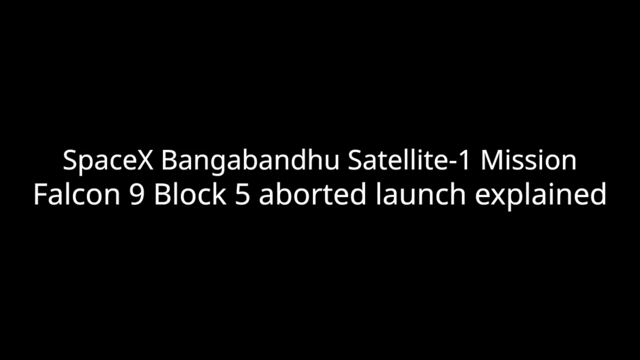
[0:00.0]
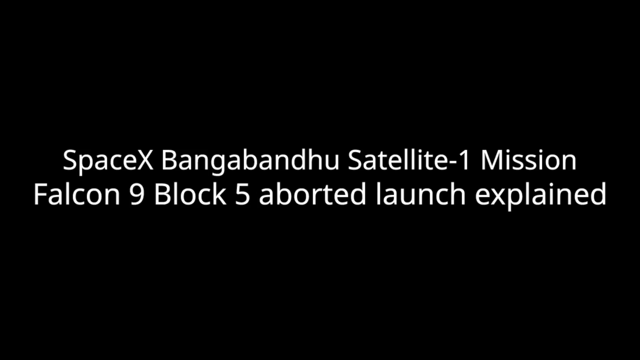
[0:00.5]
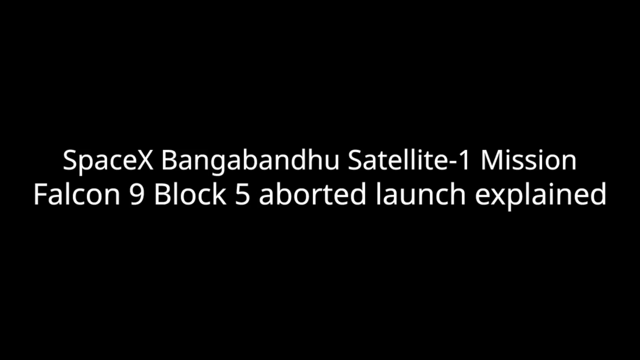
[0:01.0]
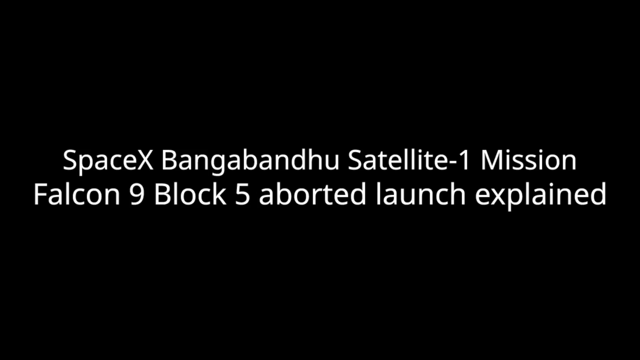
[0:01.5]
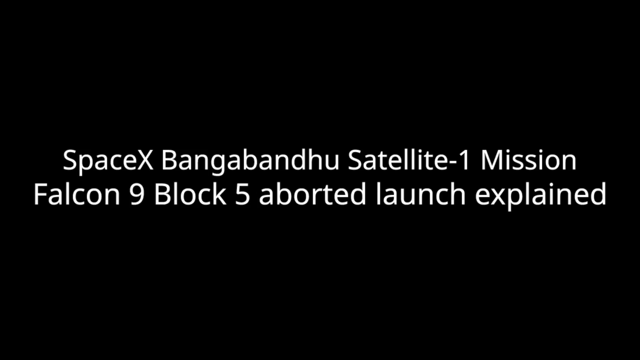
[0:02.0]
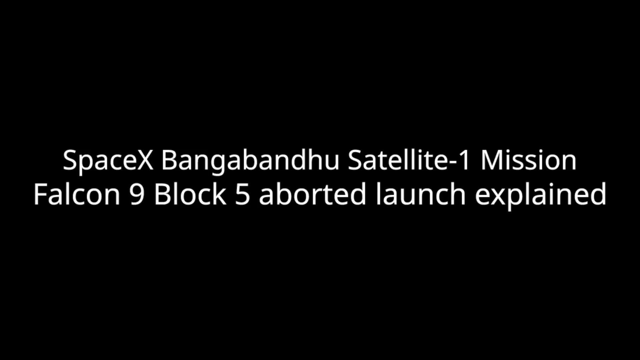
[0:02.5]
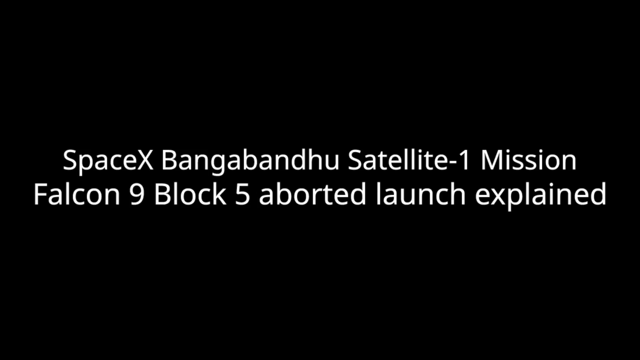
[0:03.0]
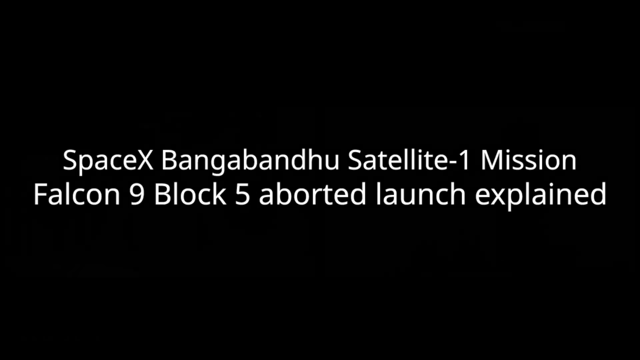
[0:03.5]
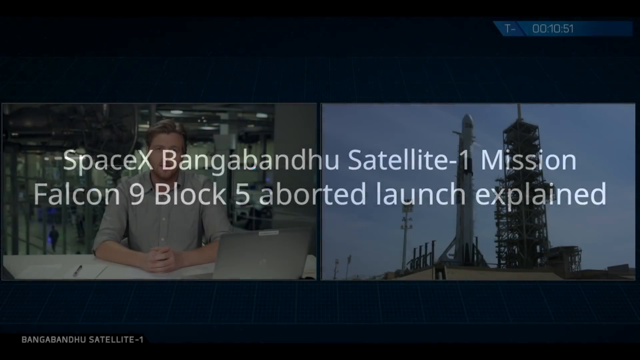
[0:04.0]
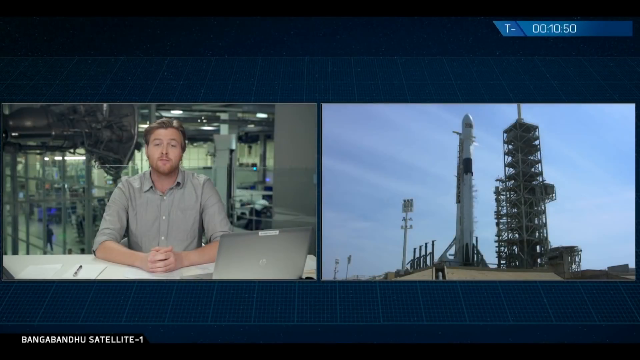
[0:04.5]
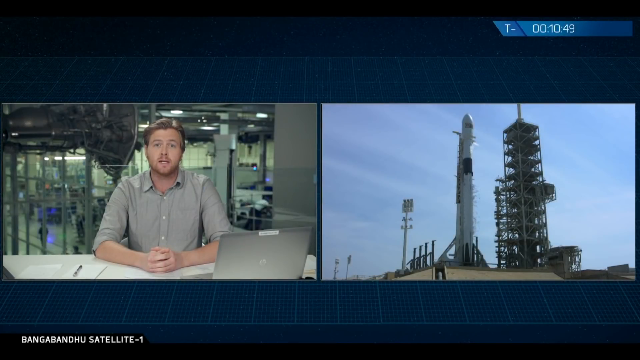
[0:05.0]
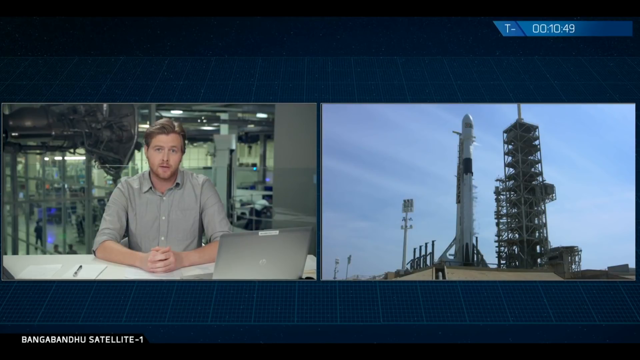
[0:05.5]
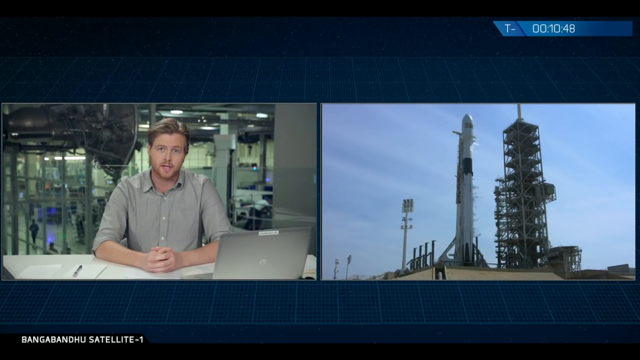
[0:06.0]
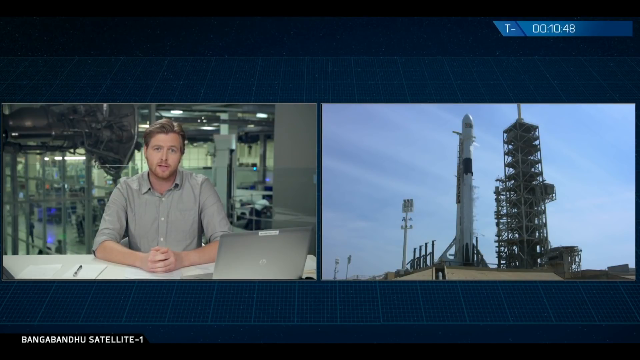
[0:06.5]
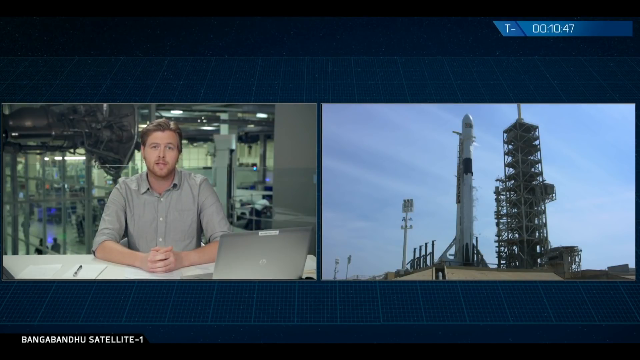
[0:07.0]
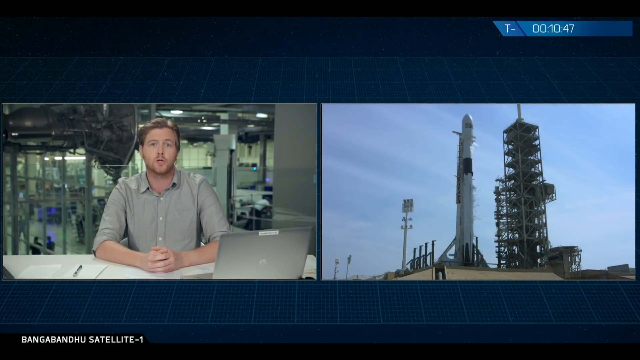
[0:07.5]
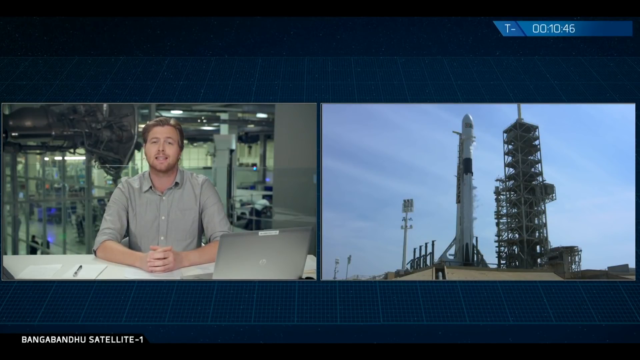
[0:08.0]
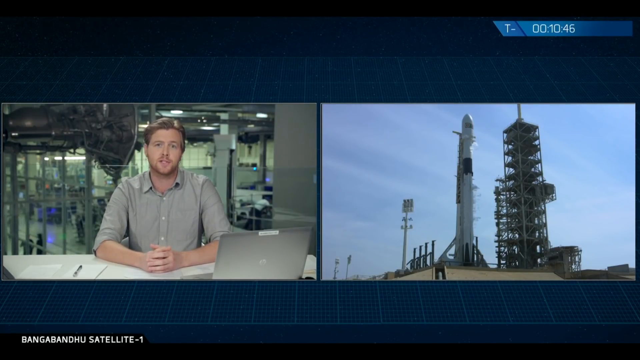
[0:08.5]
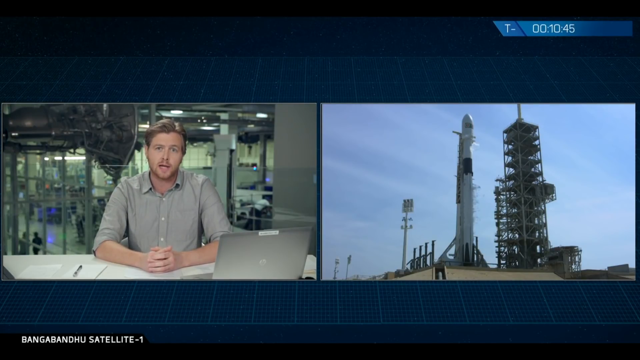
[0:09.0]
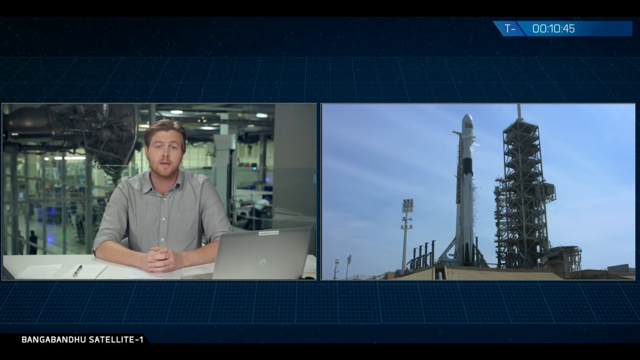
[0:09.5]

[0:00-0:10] Text reading "SpaceX Bangabandhu Satellite One Mission Falcon 9 Block 5 Aborted Launch Explained" appears over a black background. Next, a news reporter is reporting the news in a newsroom, and as he talks, a tower is displayed next to his video. The time is displayed in the top right corner.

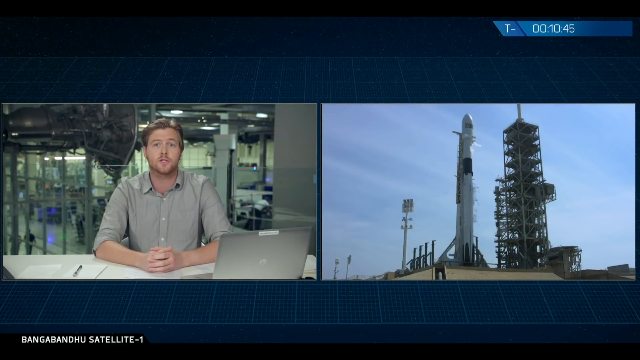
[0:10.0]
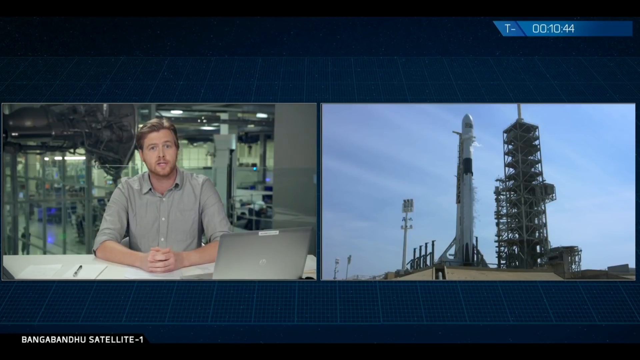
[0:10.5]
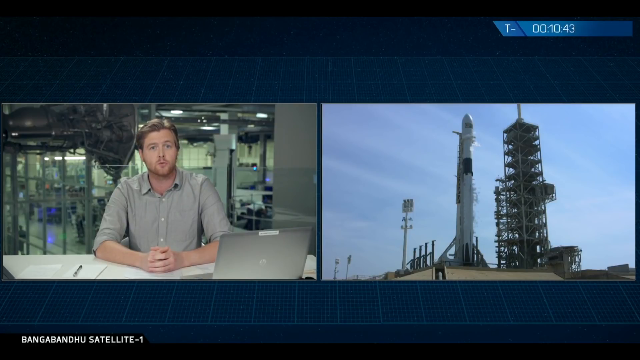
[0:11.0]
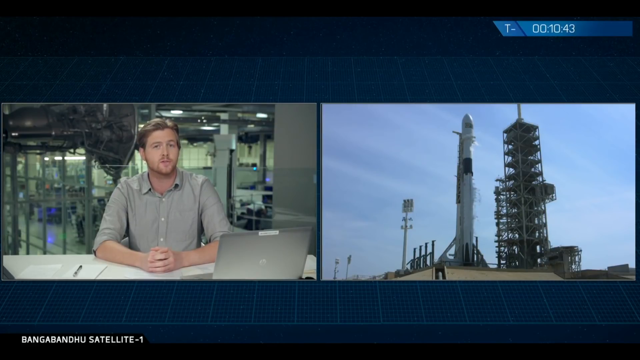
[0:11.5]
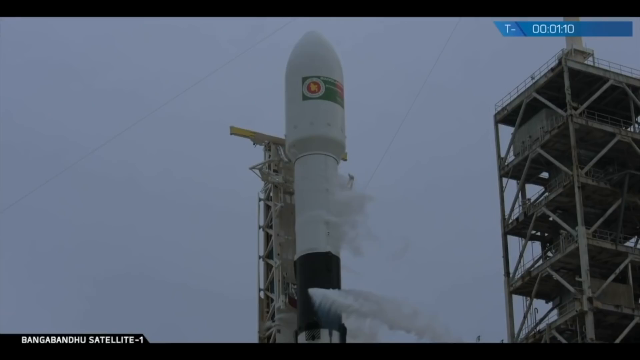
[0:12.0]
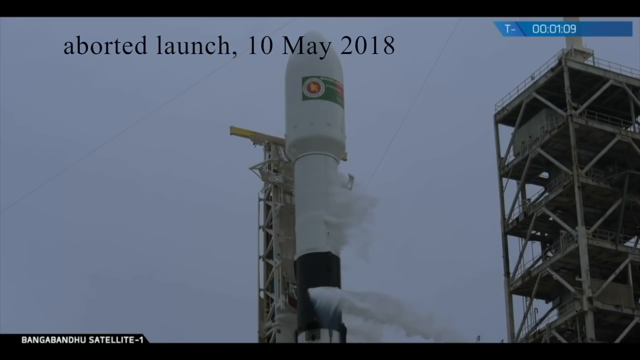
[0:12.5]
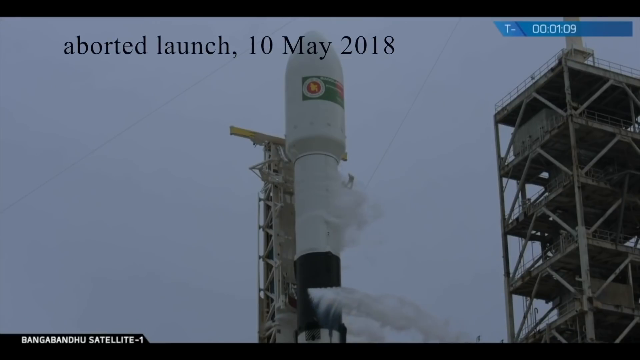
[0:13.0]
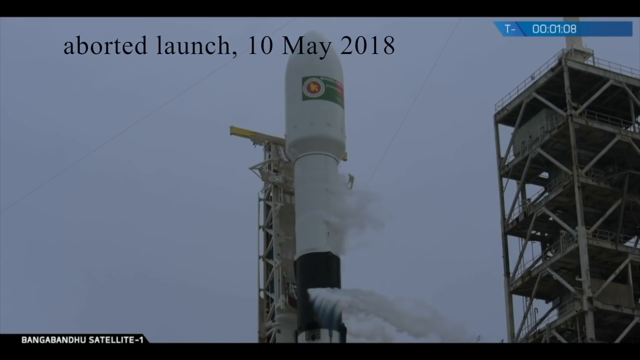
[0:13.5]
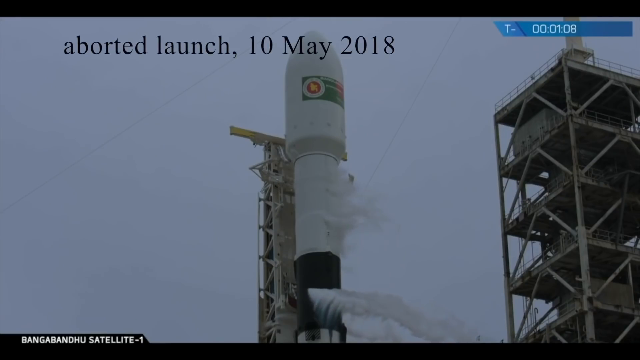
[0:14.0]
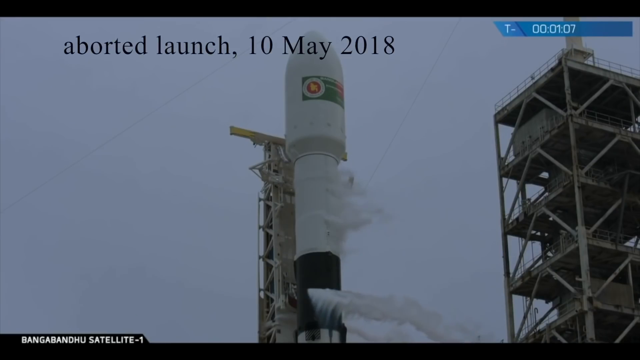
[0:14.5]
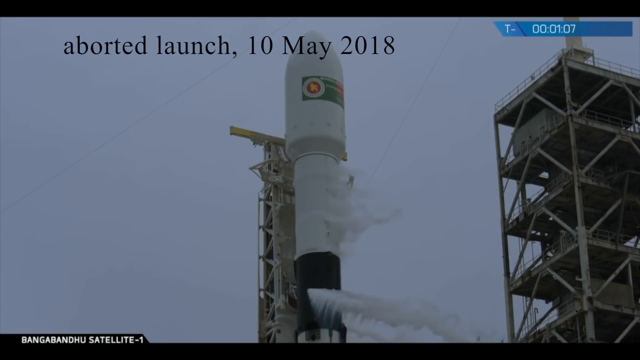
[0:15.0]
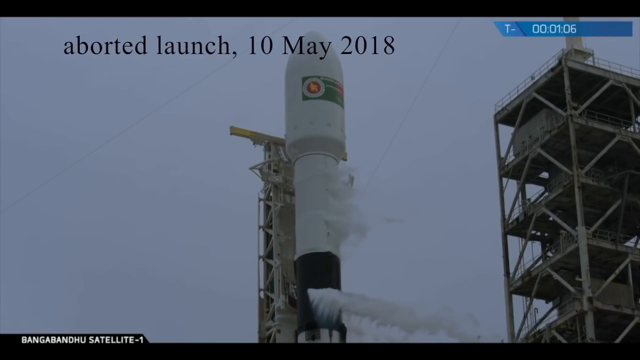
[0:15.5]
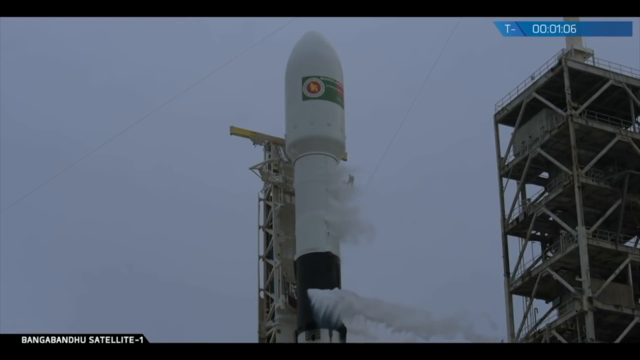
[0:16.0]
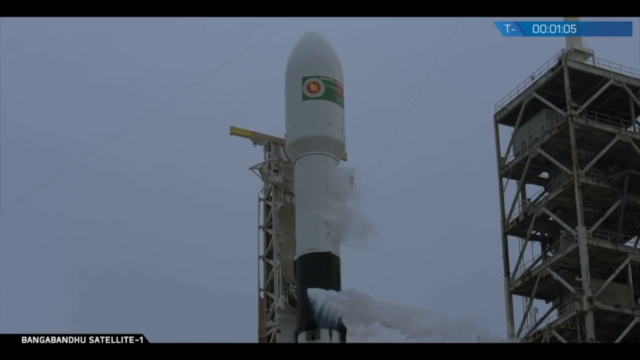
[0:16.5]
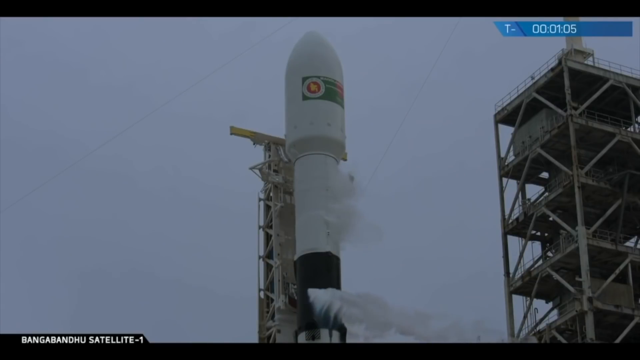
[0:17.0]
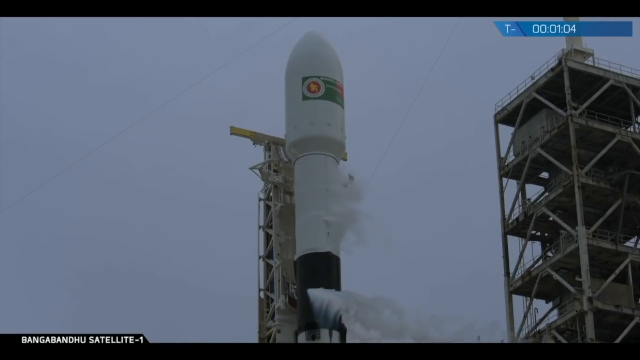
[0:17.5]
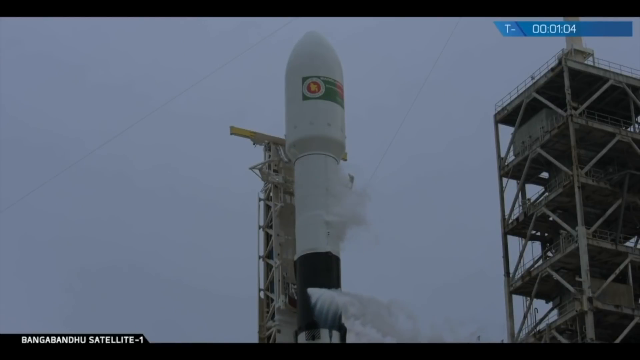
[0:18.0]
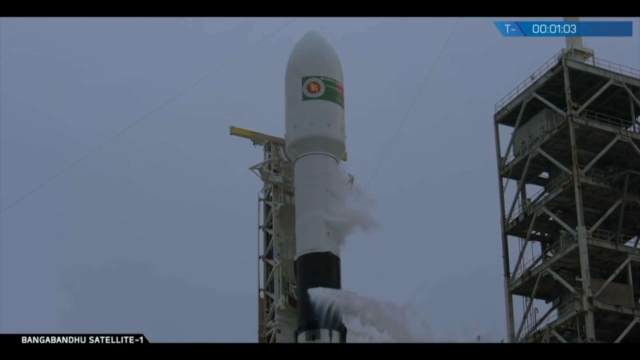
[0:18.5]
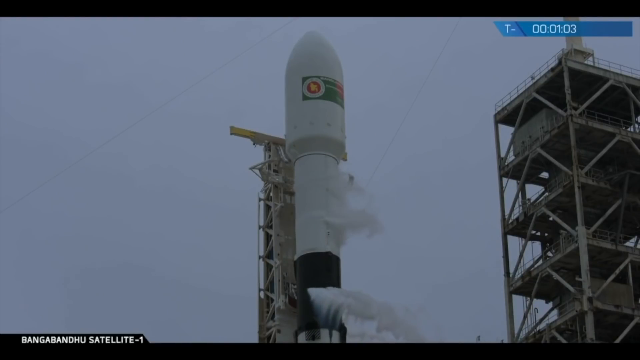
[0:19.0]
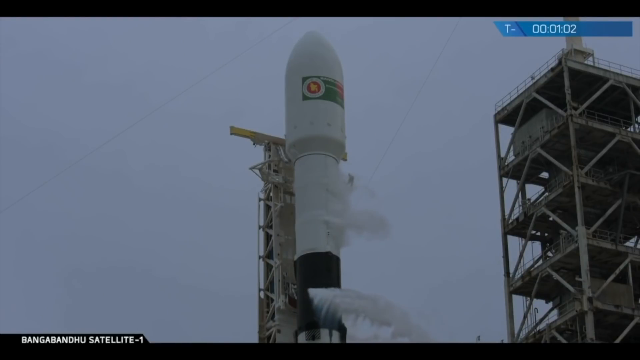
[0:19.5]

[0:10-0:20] A news reporter reads the news while a tower with a drone-like object attached to it is shown, with some smoke coming out of the drone-like thing. Beside this image of the tower, the man continues reporting as he sits at the desk, with some machinery in his background and a laptop in front of him.